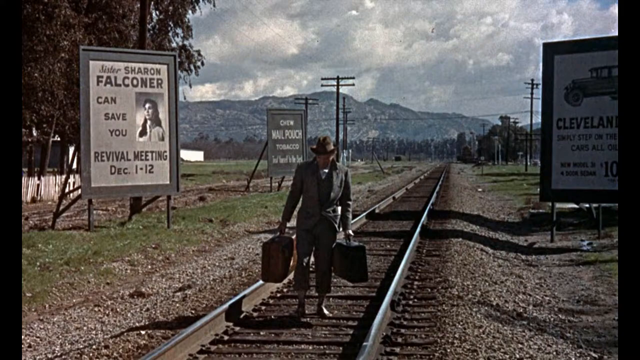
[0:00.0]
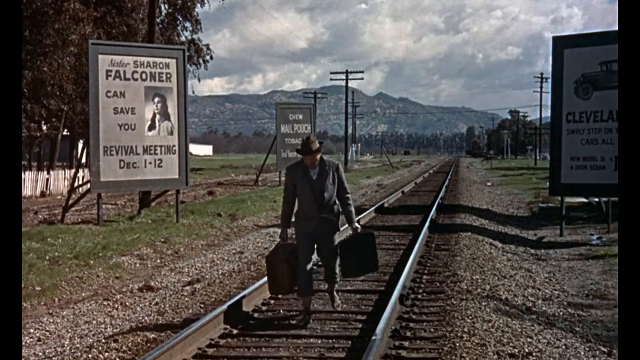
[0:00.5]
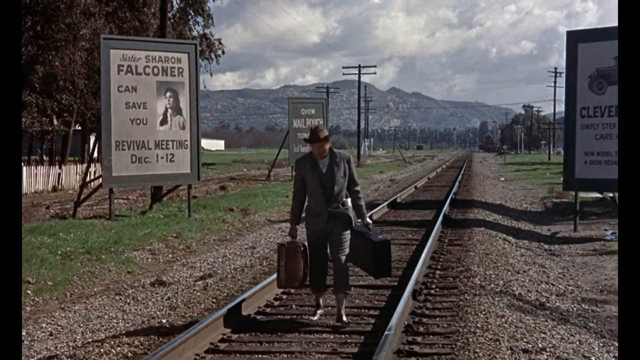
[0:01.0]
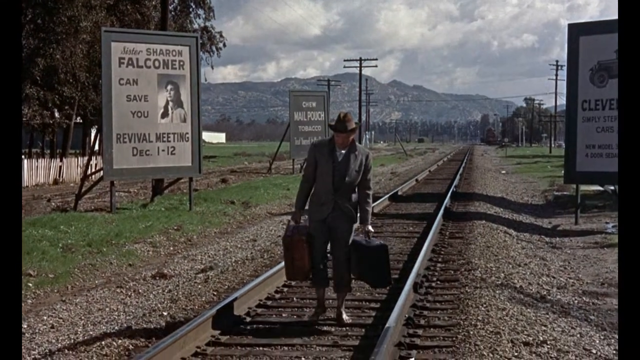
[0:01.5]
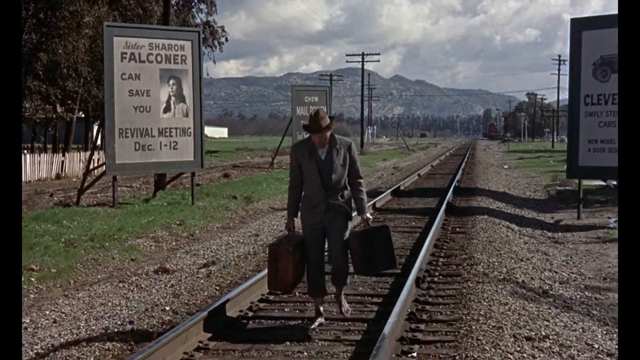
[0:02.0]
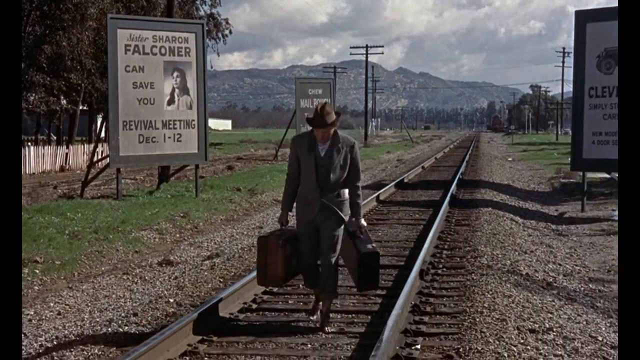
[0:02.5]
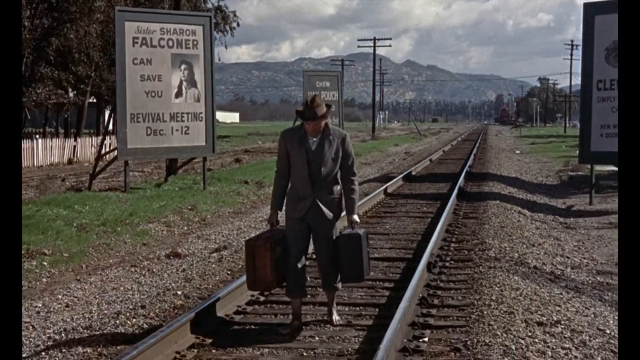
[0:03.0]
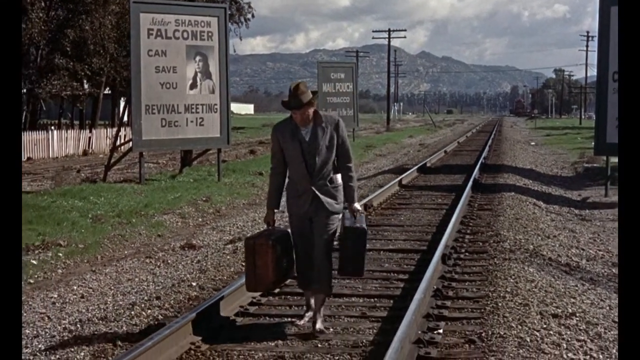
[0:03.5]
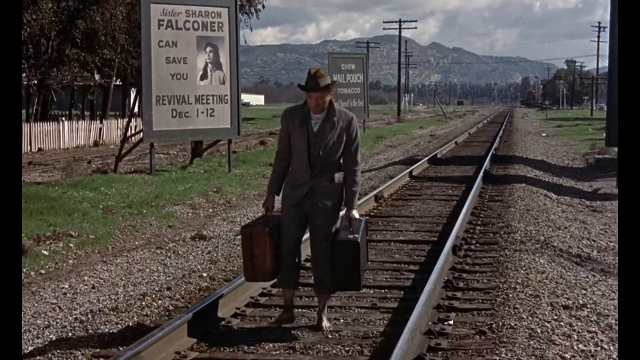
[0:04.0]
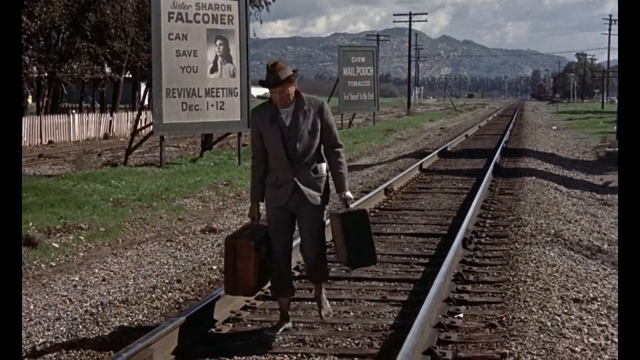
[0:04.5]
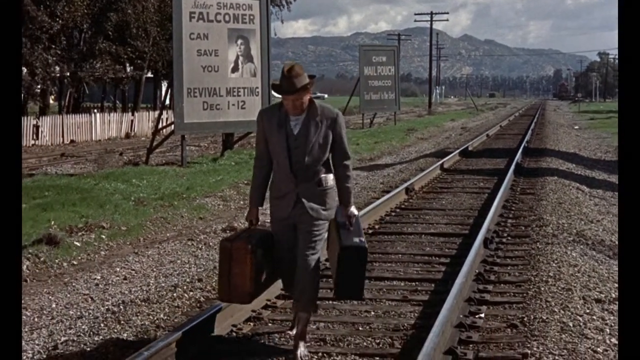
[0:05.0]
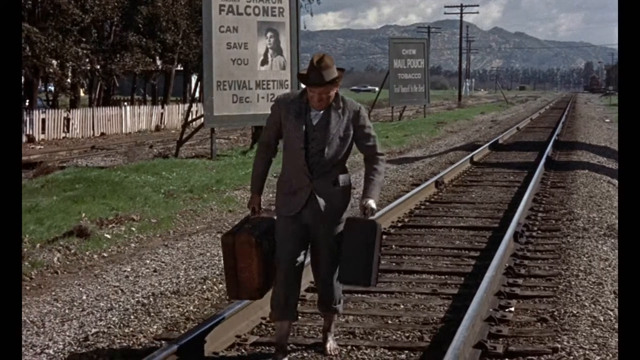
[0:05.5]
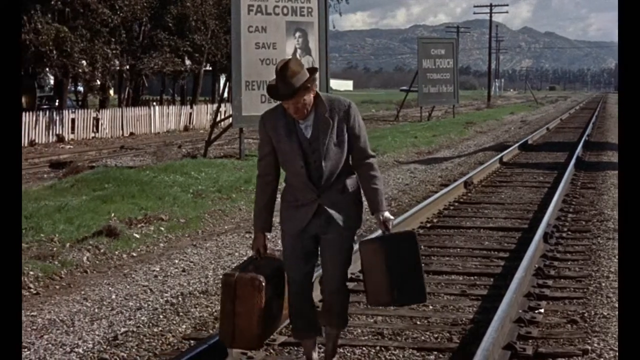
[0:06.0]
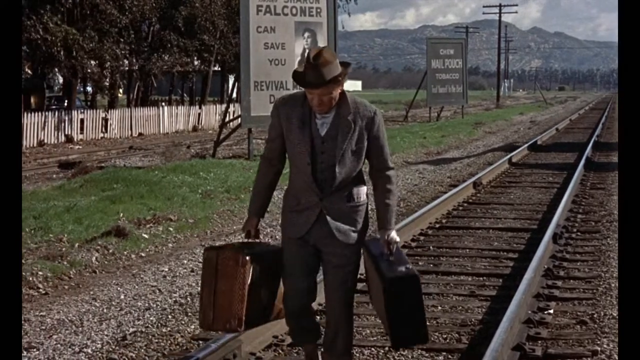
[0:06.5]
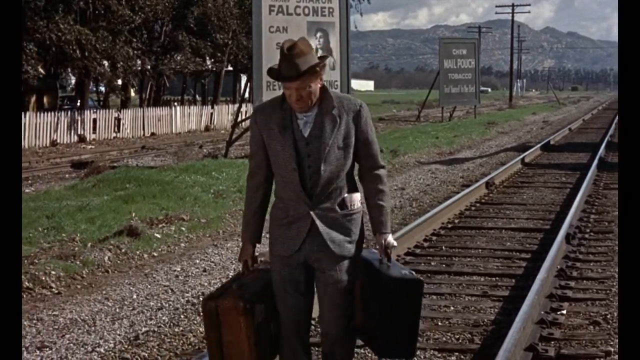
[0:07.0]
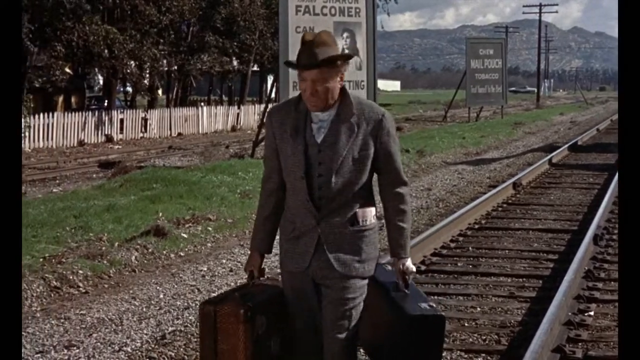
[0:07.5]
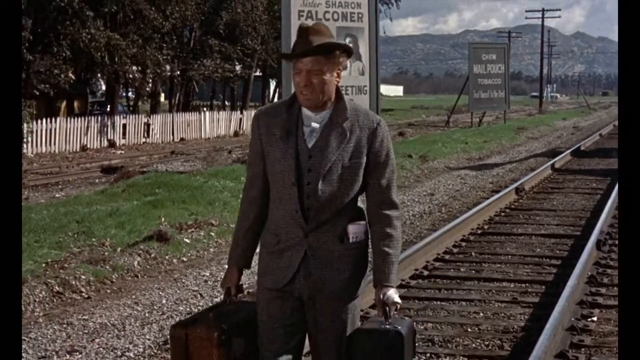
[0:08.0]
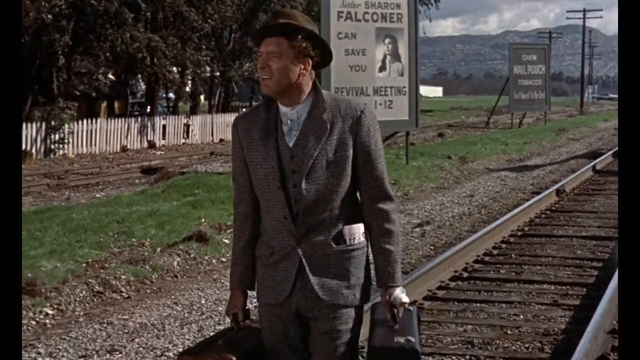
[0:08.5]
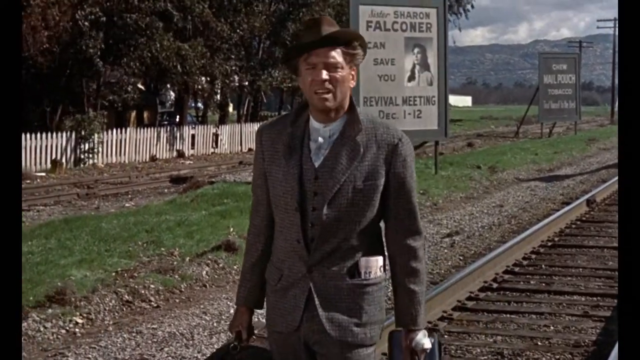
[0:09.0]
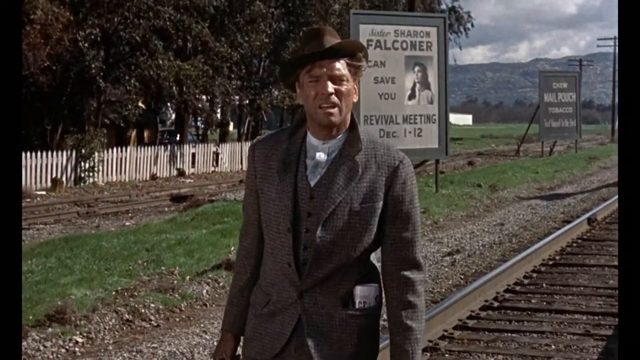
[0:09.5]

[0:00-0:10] A man walks down a train track with two suitcases in his hands and a newspaper in his pocket, and he has no shoes on. He looks left and right, maybe looking for a train. There are posters on either side of the track, one of which clearly reads "Sharon Falconer can save you, revival meeting December 1st to 12th."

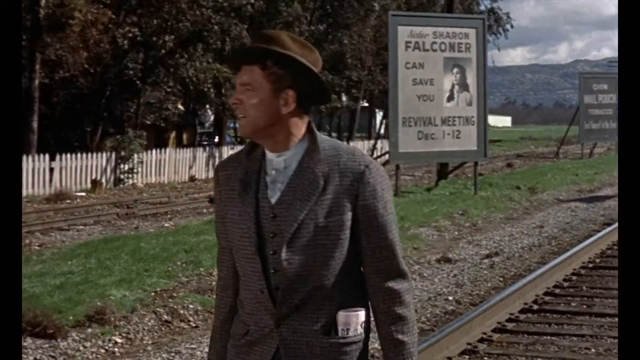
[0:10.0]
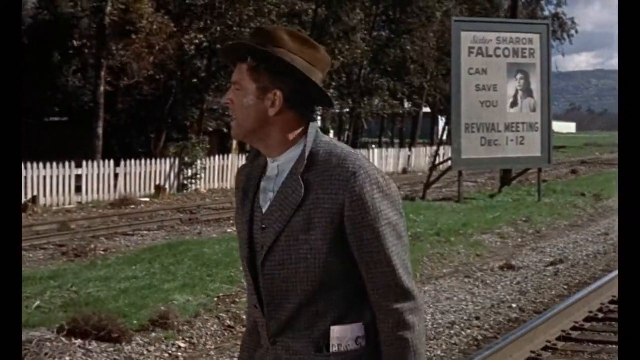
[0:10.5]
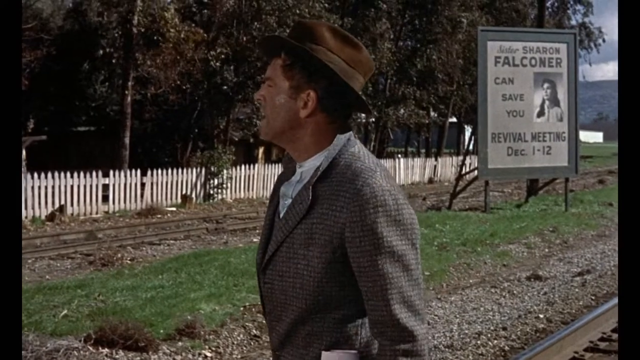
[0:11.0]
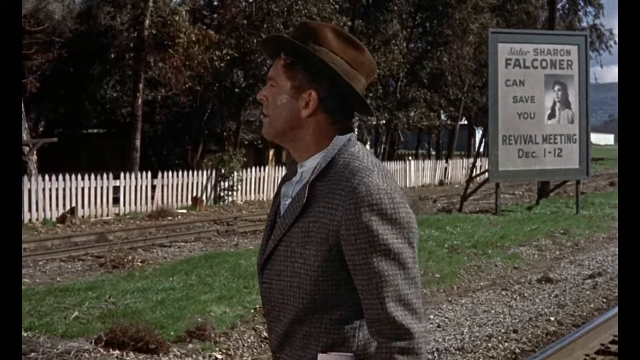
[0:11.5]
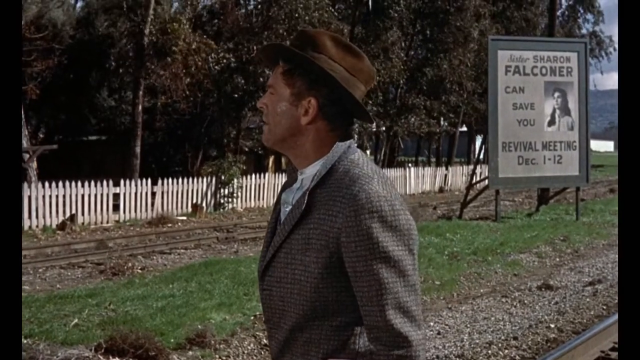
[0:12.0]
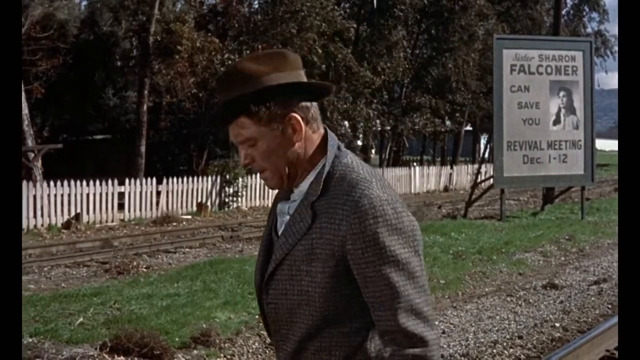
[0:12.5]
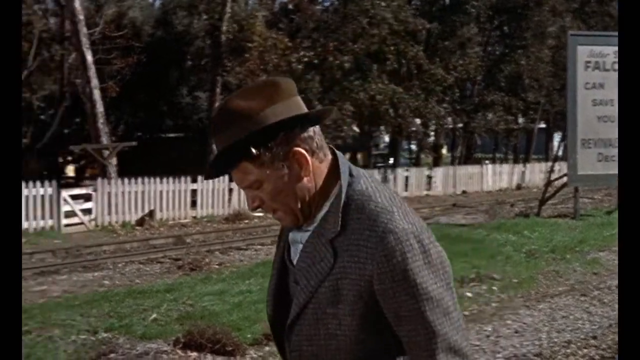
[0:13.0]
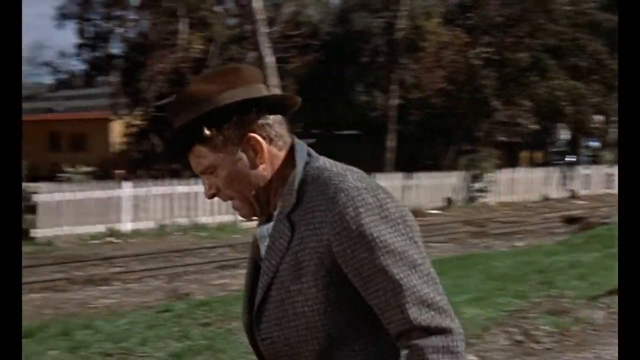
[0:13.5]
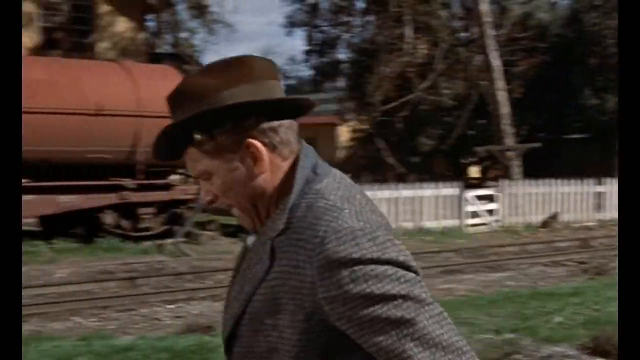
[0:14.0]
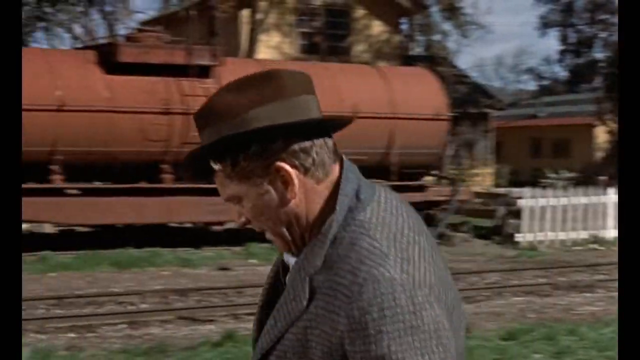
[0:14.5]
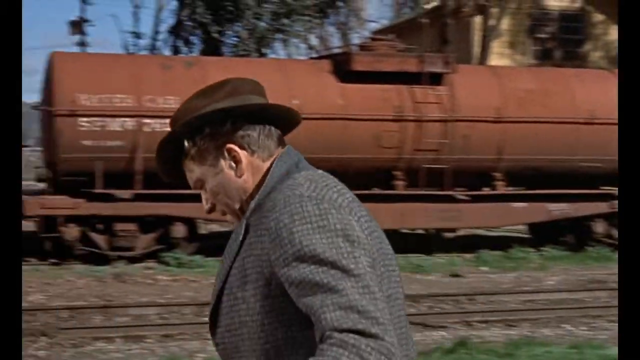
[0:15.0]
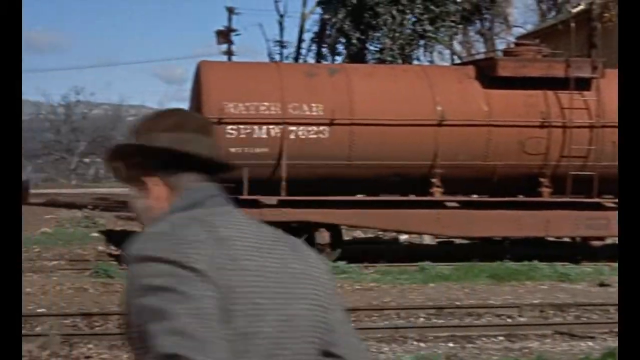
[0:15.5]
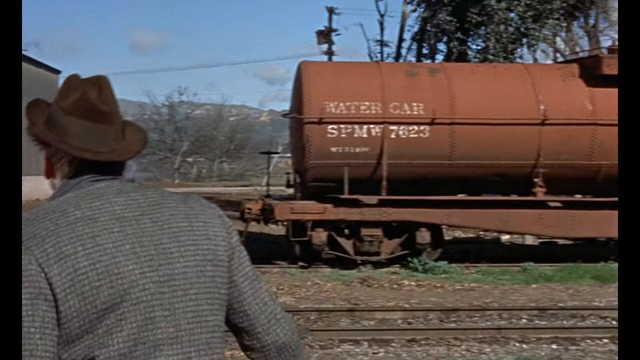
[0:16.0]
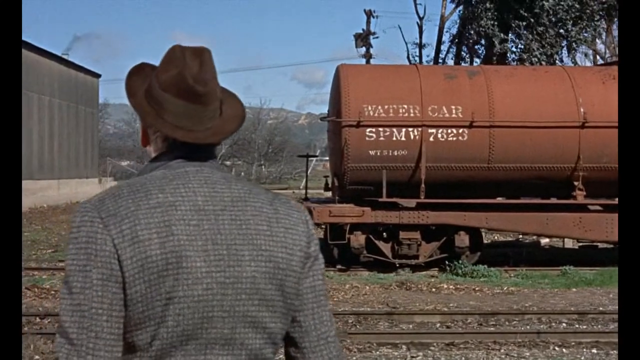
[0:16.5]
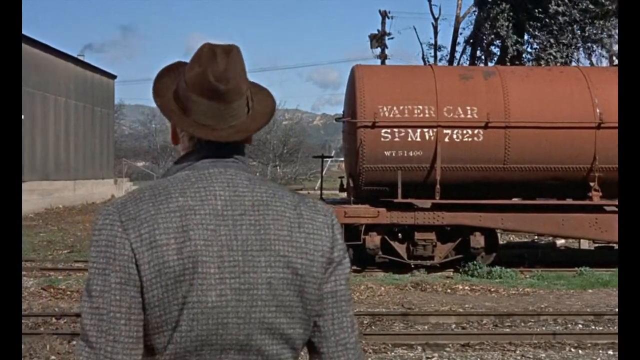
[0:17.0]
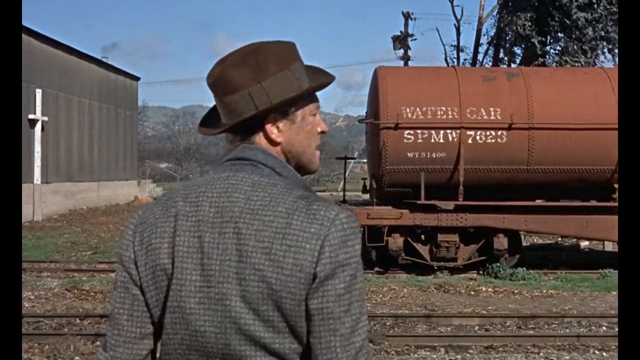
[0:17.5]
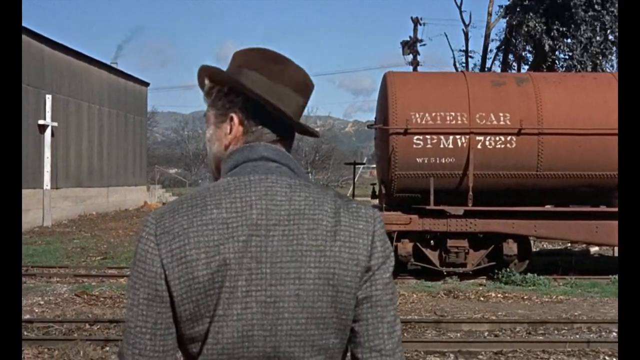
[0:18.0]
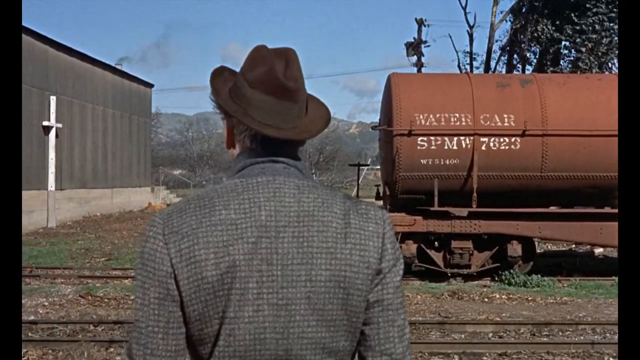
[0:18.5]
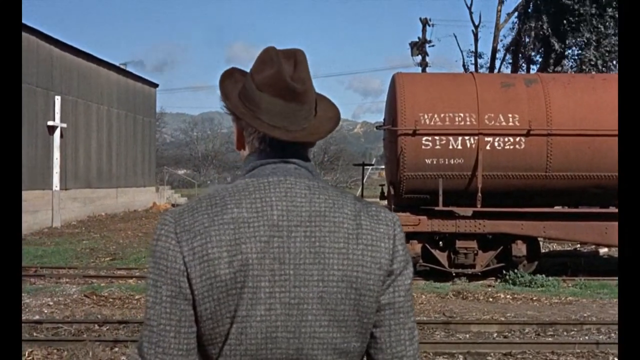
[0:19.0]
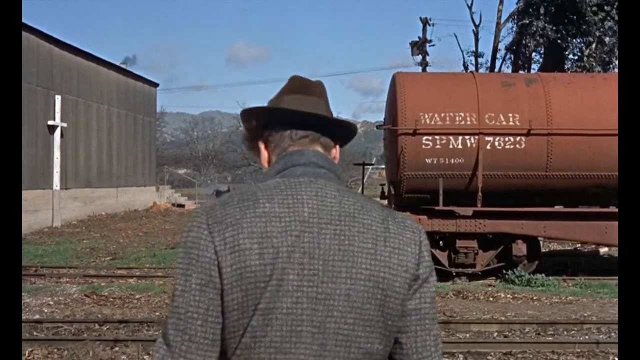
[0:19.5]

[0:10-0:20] The man's face looks kind of dirty. He apparently notices something in the area, so he walks up quickly towards it, looking left and right, and suddenly takes a step forward. Seen a little closer, he looks about 30 to 35 years old and wears a grey suit. A water car with the code "SPMW7623" is in the background. There is a cross on the wall of a little building, possibly indicating a church nearby.